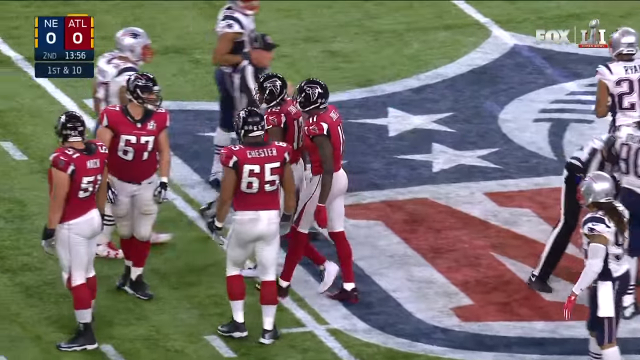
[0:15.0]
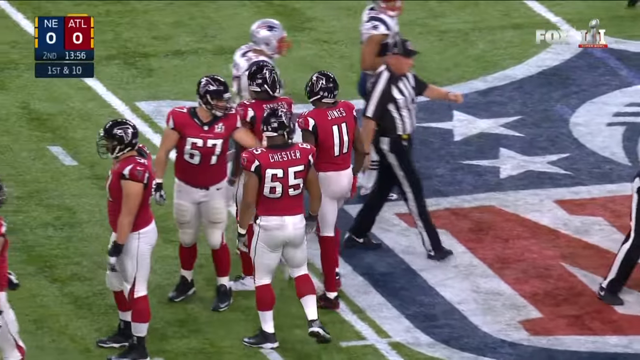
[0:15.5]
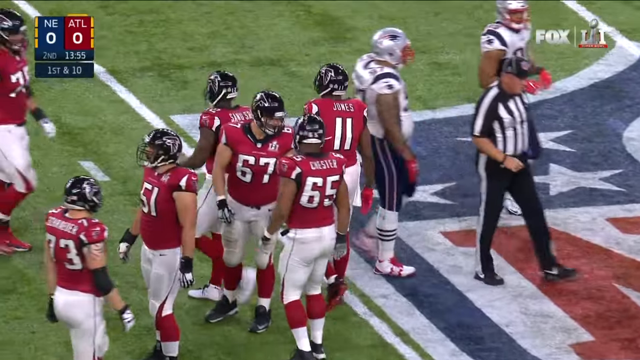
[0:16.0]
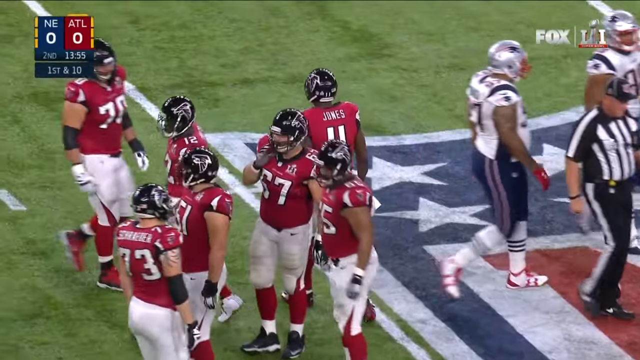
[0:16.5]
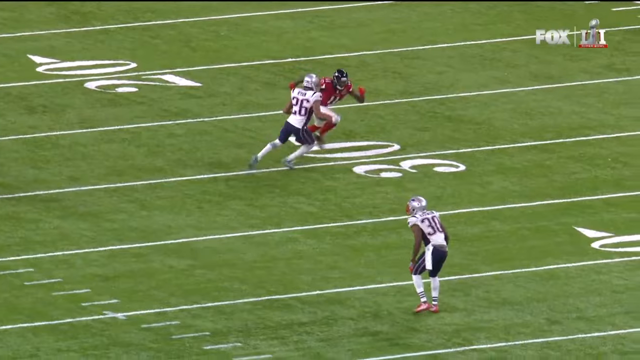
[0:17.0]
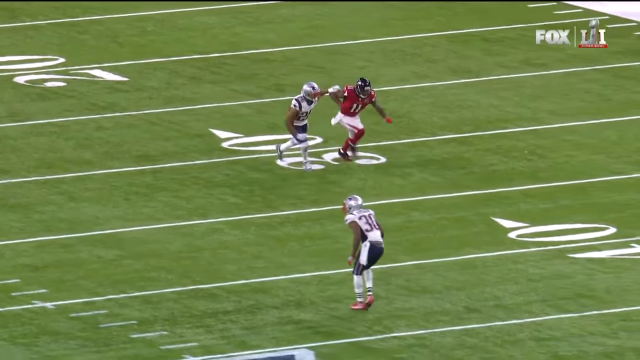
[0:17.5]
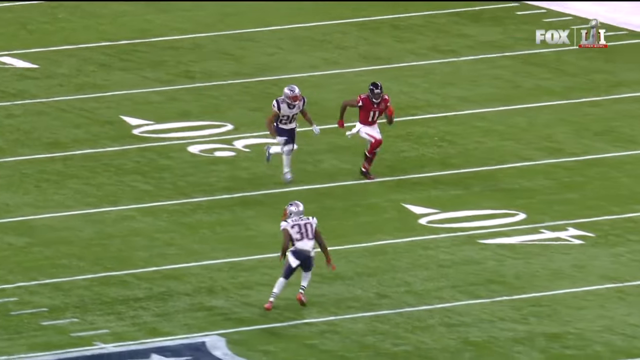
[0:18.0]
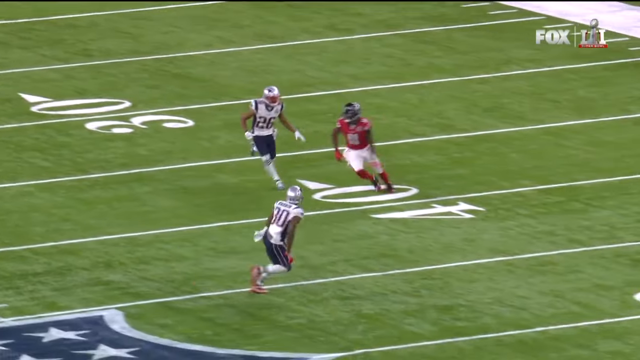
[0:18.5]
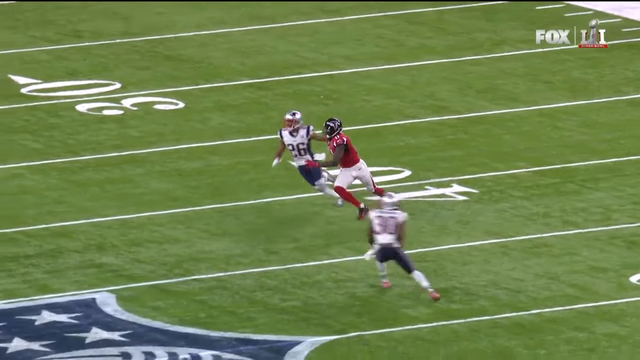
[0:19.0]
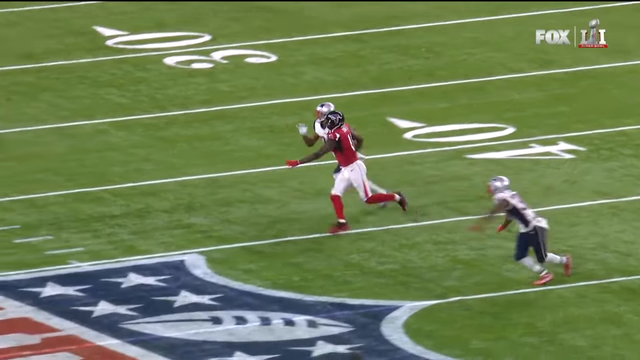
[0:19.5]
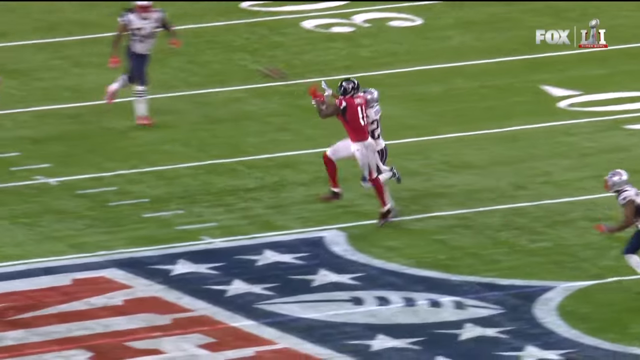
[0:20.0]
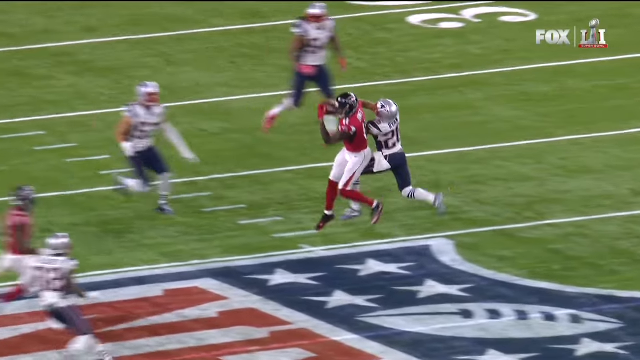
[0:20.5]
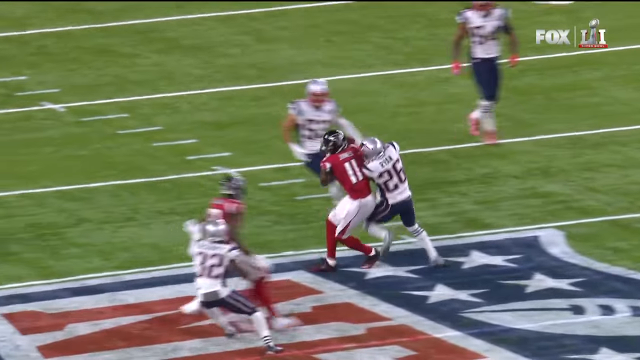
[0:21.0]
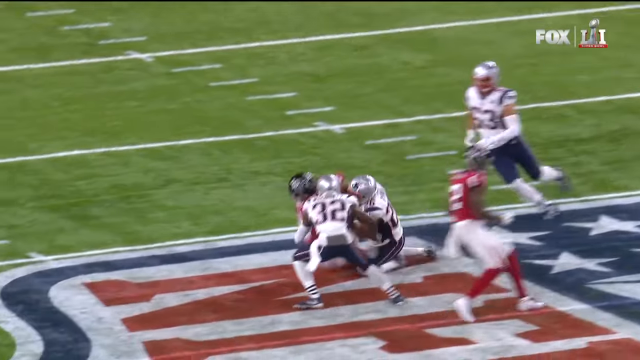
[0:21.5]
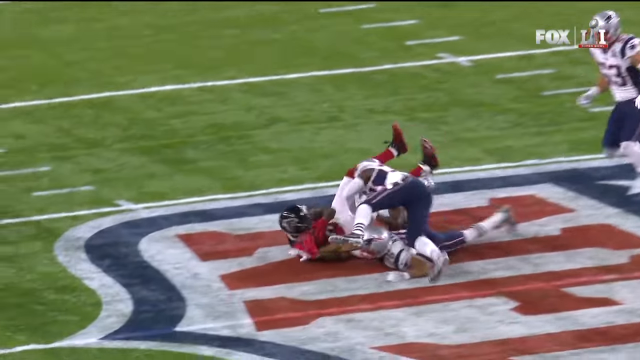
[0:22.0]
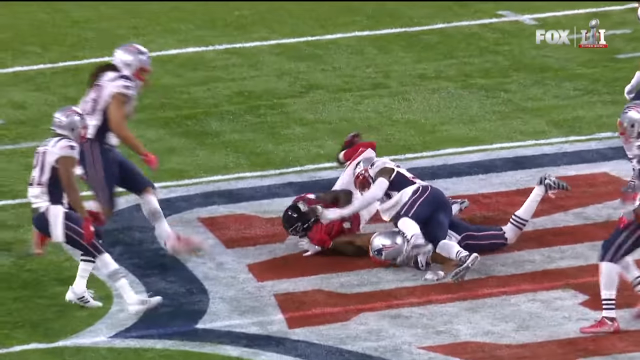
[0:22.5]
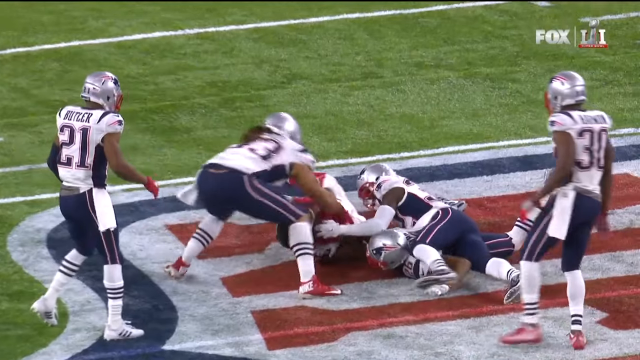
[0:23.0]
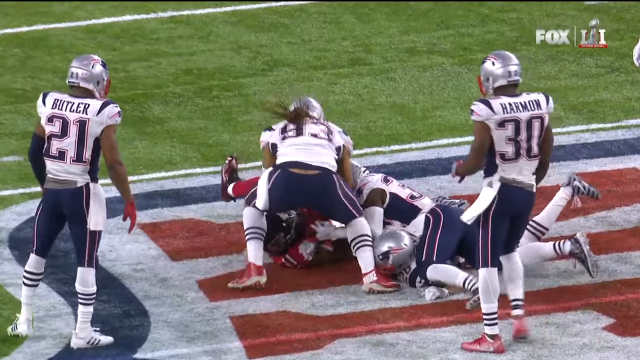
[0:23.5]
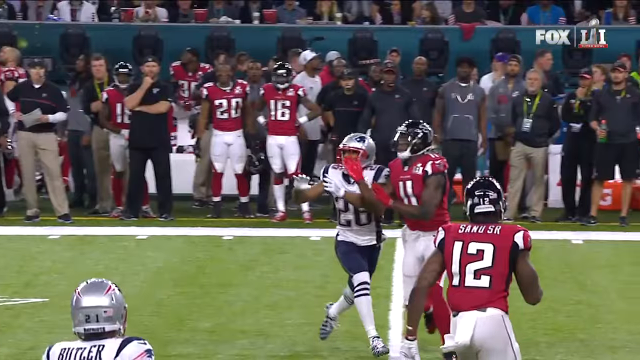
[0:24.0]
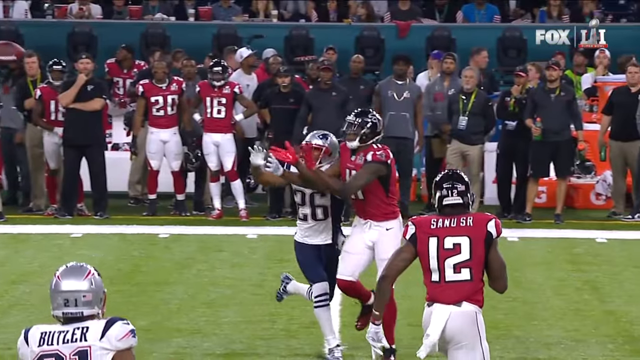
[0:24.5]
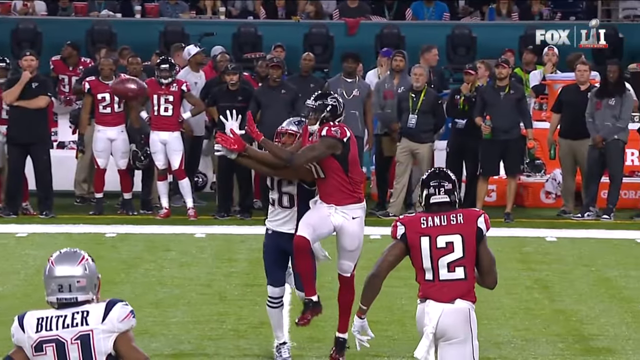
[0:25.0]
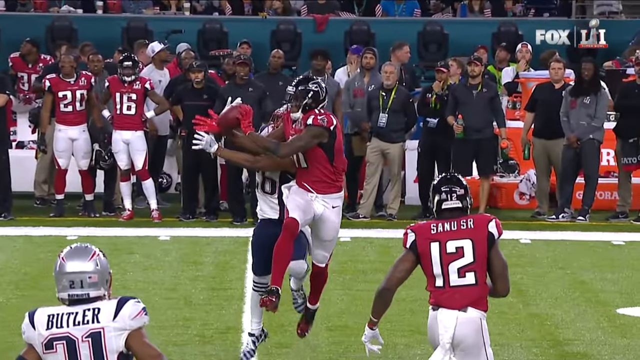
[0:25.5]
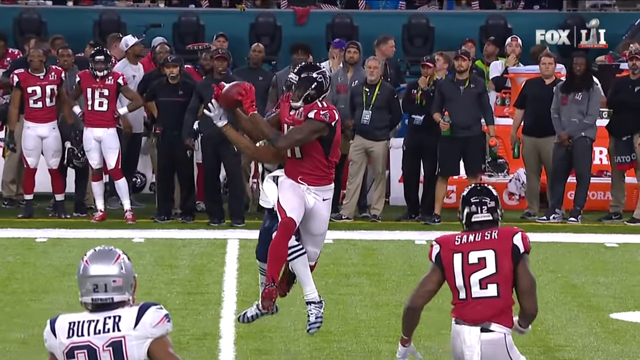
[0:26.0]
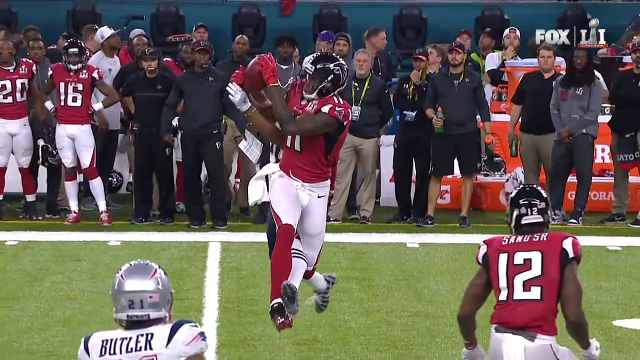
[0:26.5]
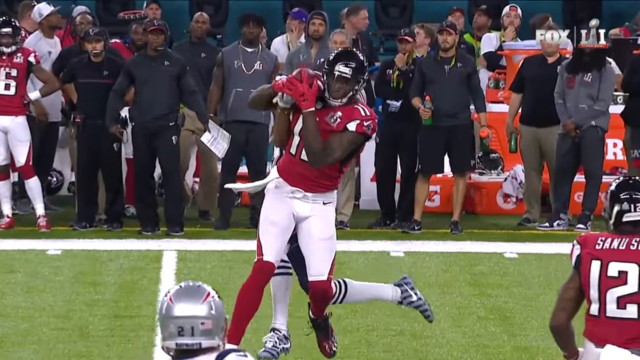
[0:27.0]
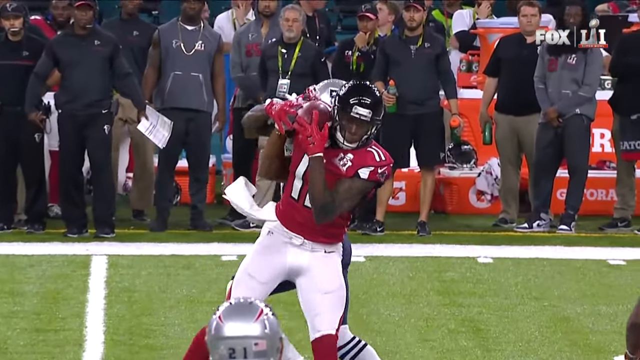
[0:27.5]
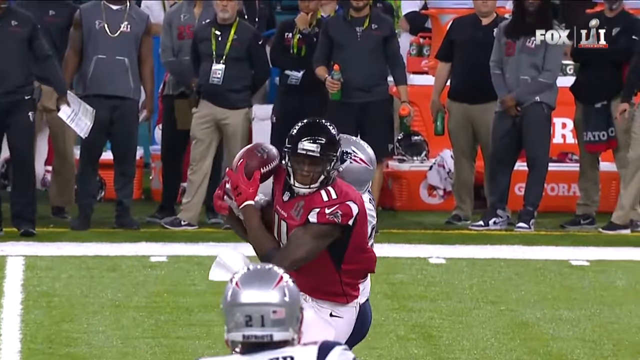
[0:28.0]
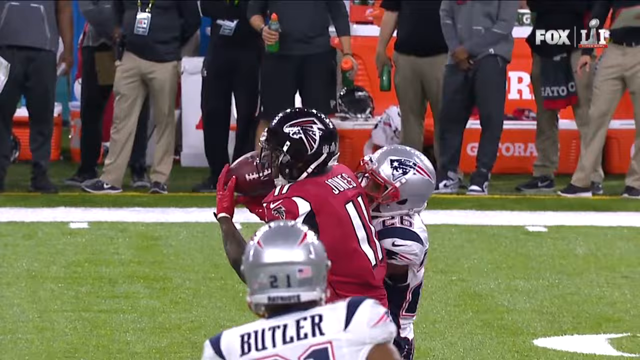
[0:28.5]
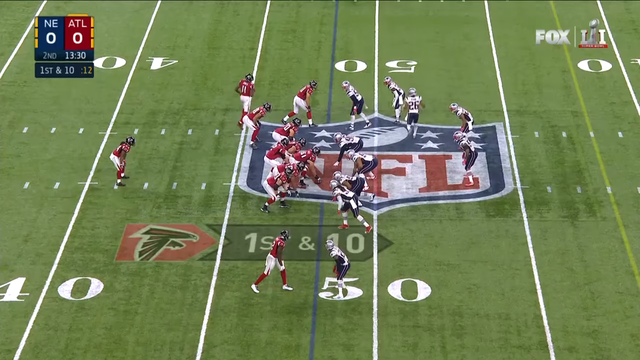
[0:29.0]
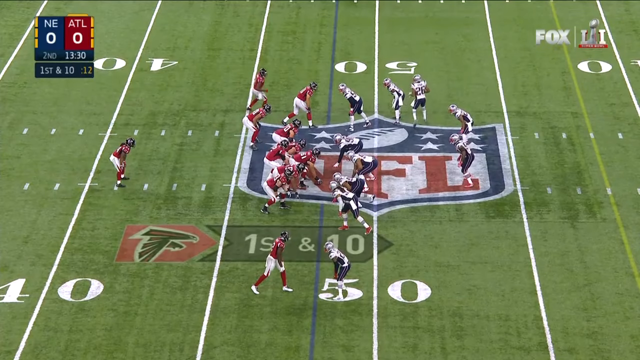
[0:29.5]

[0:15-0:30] A group of Atlanta Falcons players gathers together after Julio Jones, number 11, makes a catch right at midfield. A replay shows number 11 Julio Jones running by number 26 on the Patriots, who is trying to cover him on what looks like a post route, and Julio Jones makes the catch. The two players fall to the ground, and another Patriots player tries to jump in and rip the ball away from Julio but fails. Next, a slow-motion replay shows the play from a side angle, with various players and coaches along the Atlanta Falcons sideline on the right side and some all-orange Gatorade coolers, as Julio Jones makes the catch in slow motion. The next play is shown very quickly: the Falcons line up at the 48-yard line, first and 10 with 13 minutes and 30 seconds to go in the second quarter. The Falcons are on the left and the Patriots on the right side of the line of scrimmage; a blue line across the field shows the line of scrimmage, and a yellow line 10 yards away shows the first-down marker. There is some motion on the play.